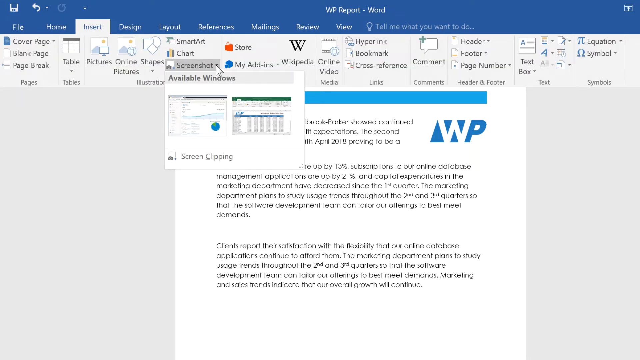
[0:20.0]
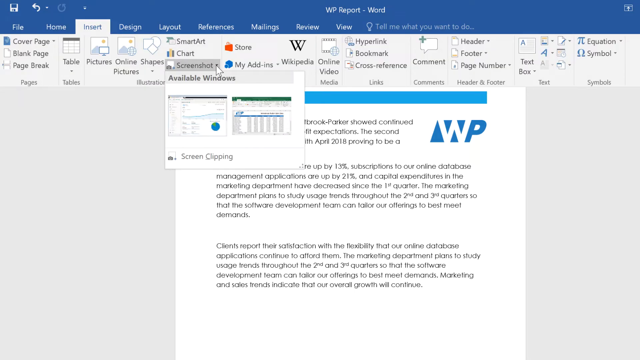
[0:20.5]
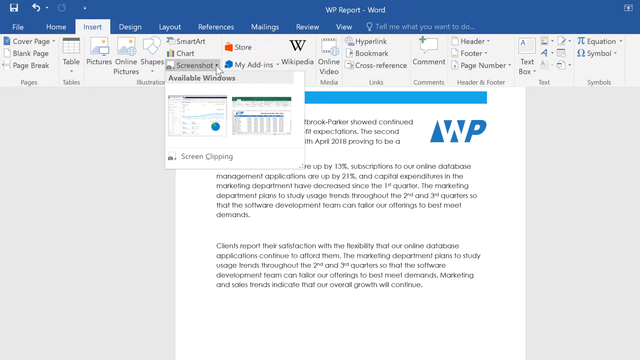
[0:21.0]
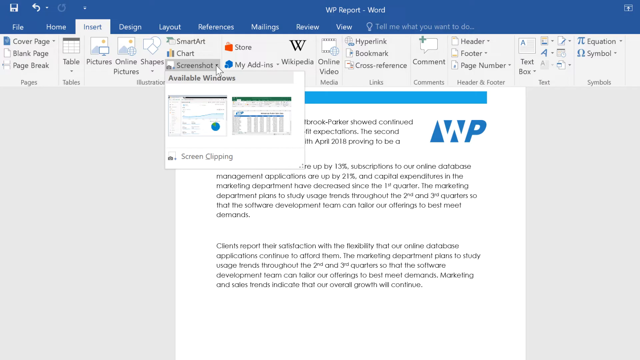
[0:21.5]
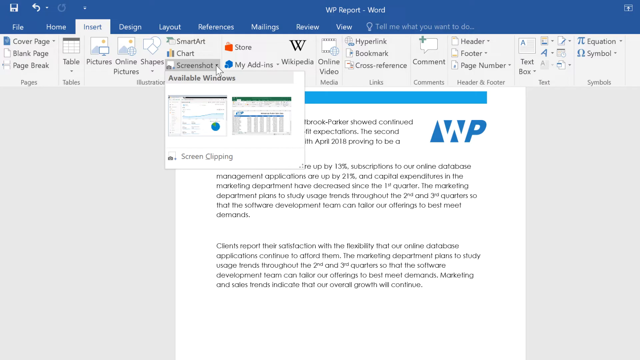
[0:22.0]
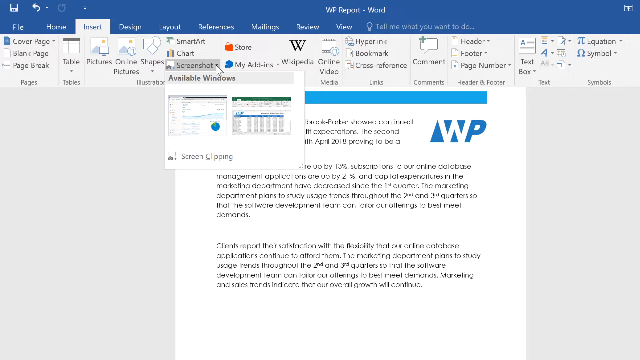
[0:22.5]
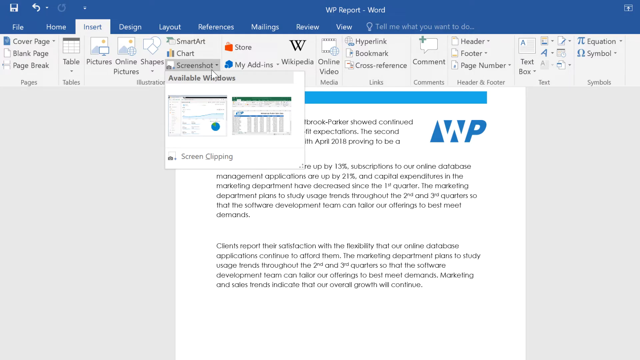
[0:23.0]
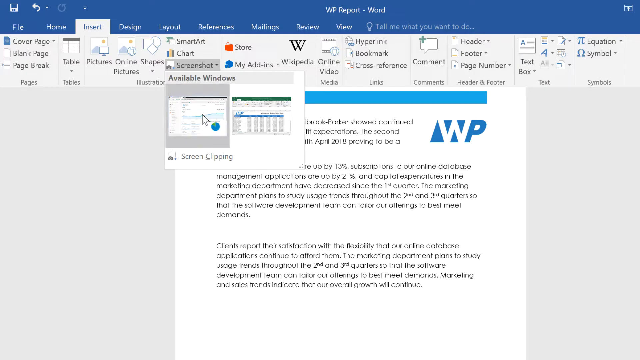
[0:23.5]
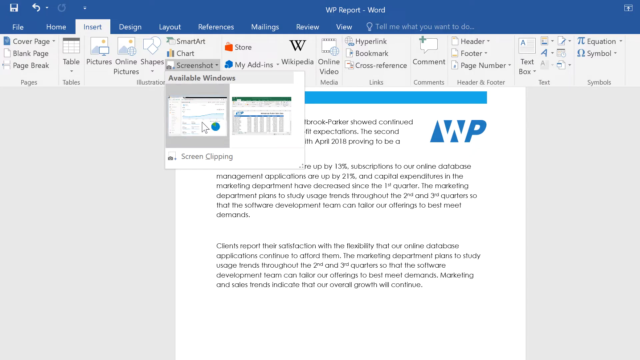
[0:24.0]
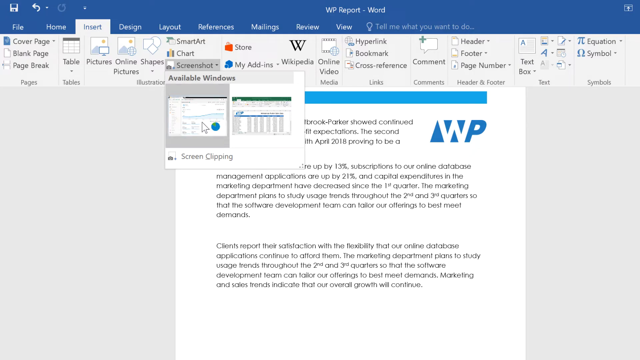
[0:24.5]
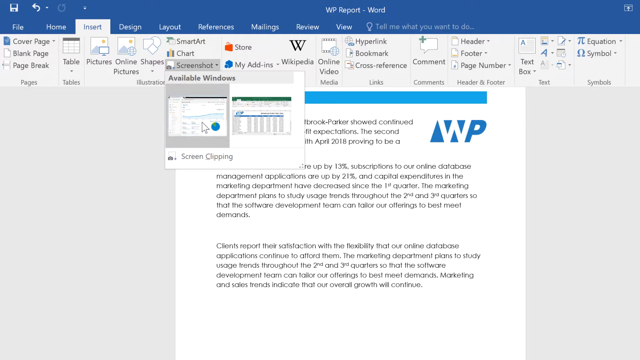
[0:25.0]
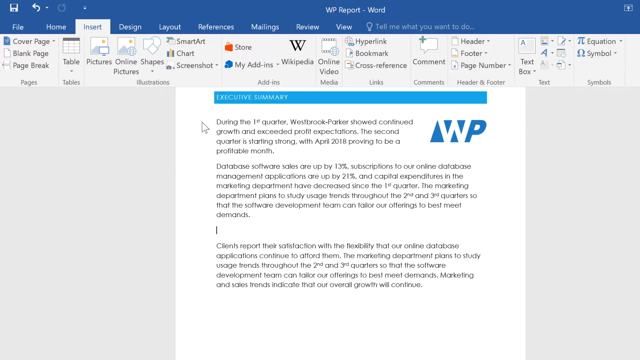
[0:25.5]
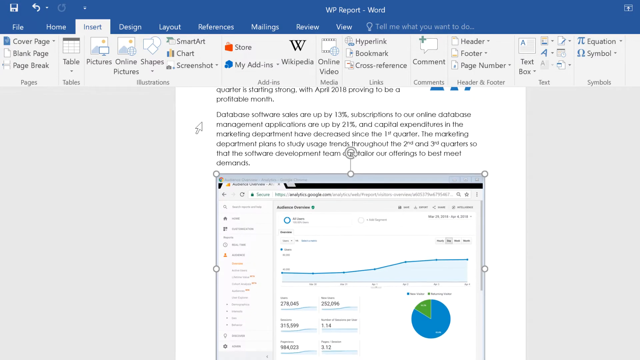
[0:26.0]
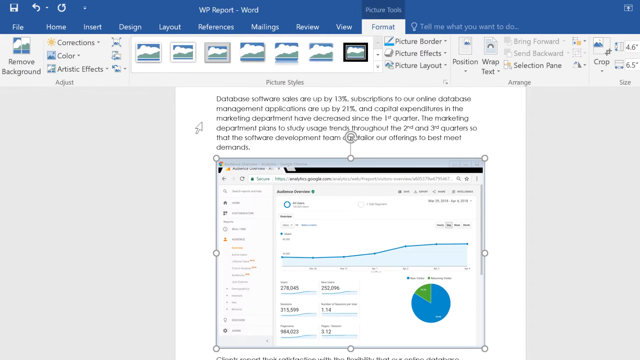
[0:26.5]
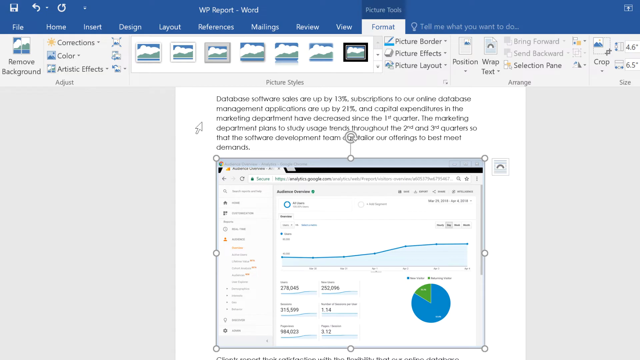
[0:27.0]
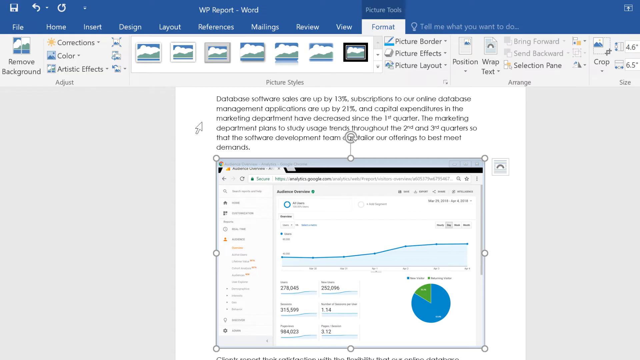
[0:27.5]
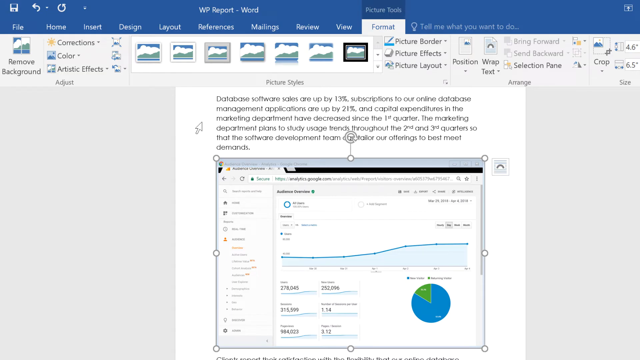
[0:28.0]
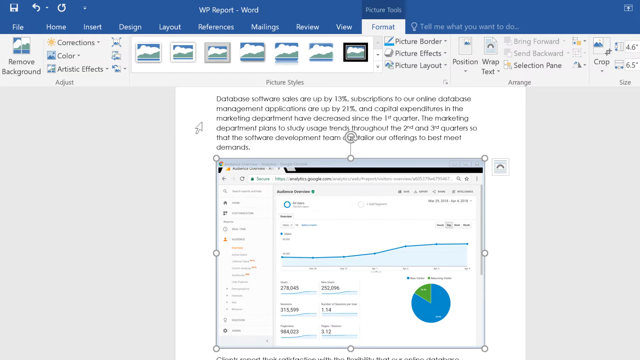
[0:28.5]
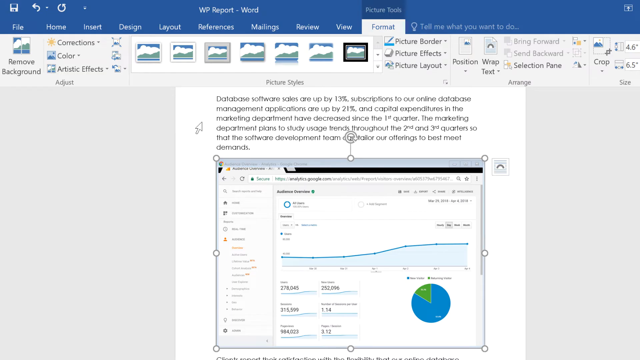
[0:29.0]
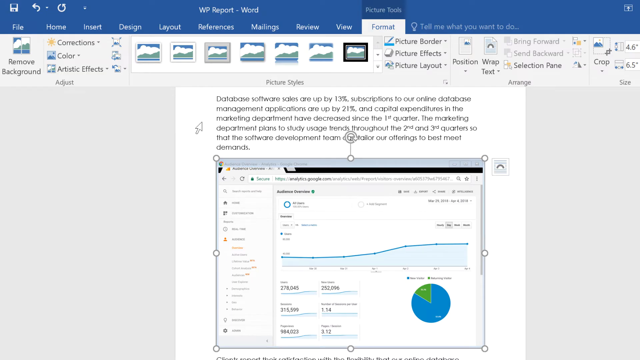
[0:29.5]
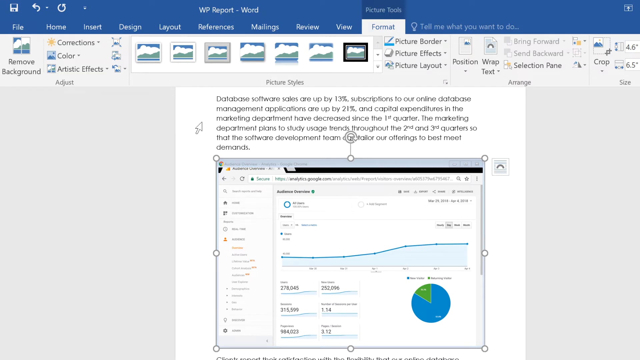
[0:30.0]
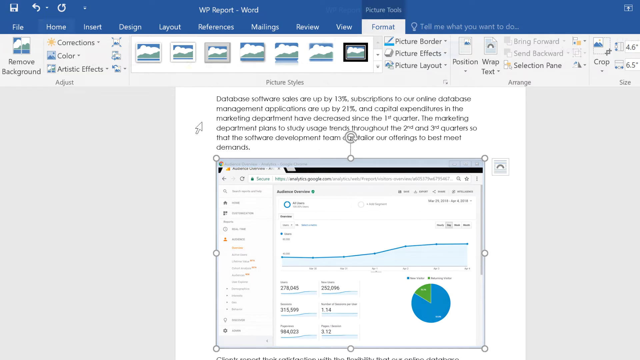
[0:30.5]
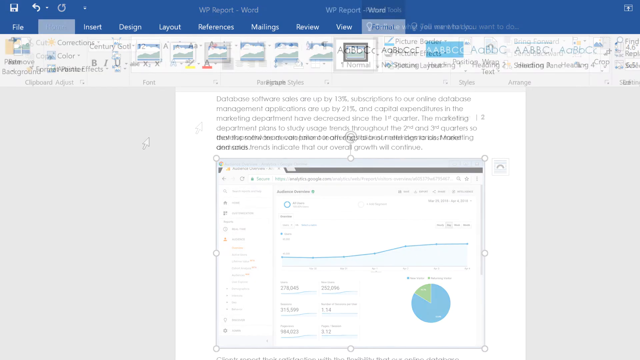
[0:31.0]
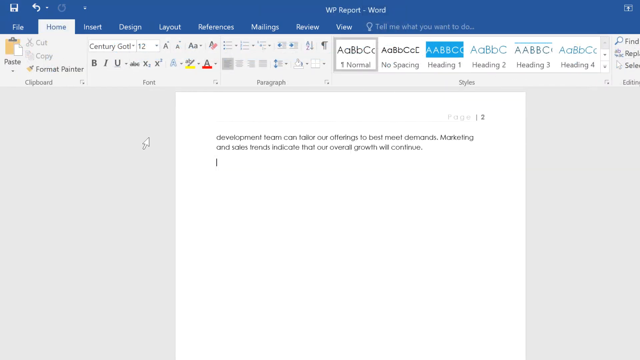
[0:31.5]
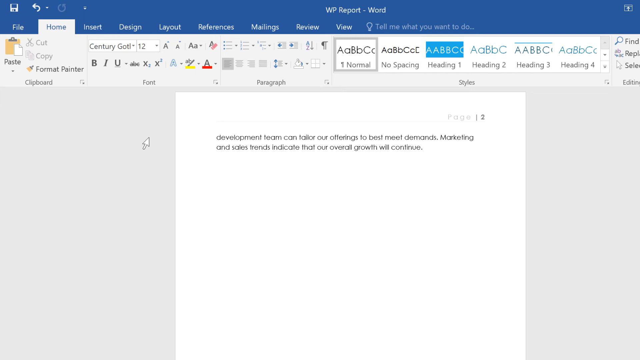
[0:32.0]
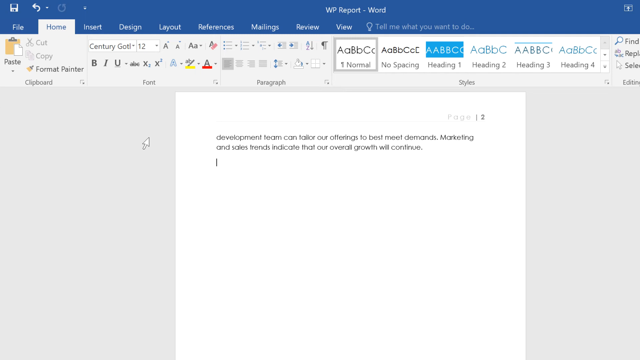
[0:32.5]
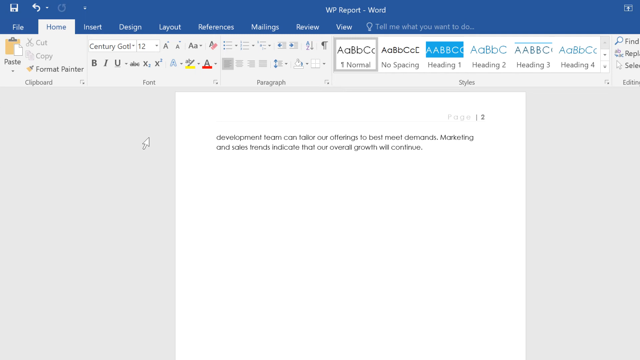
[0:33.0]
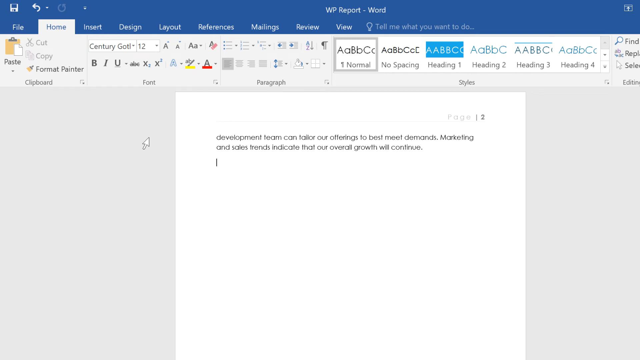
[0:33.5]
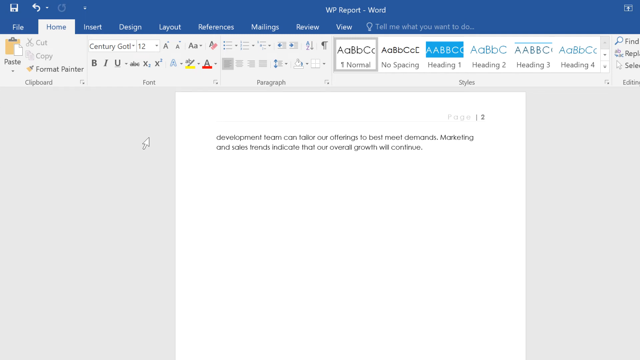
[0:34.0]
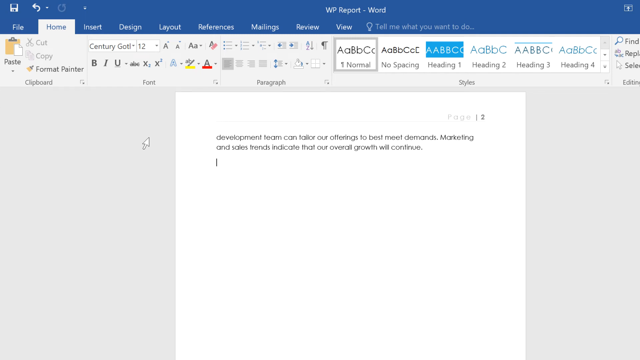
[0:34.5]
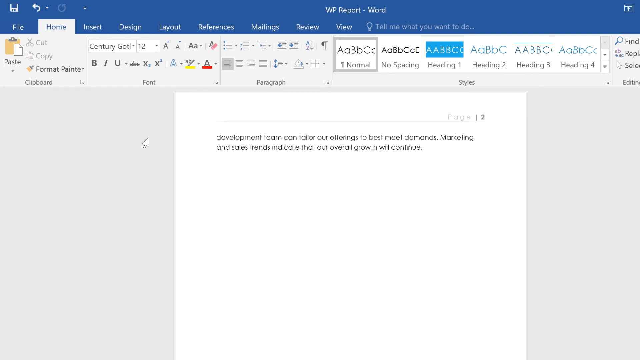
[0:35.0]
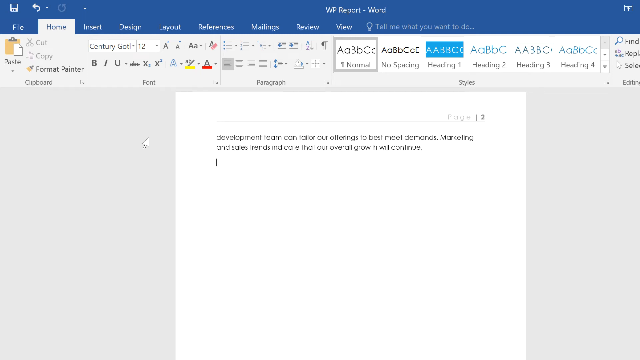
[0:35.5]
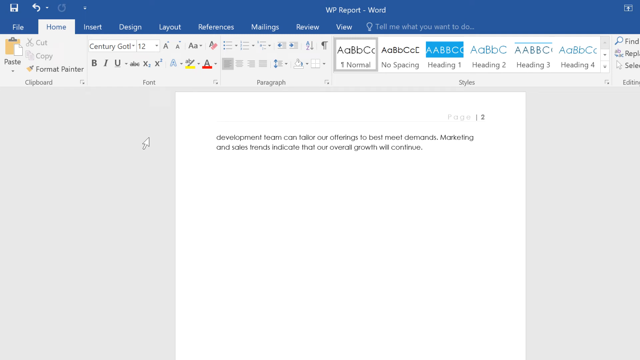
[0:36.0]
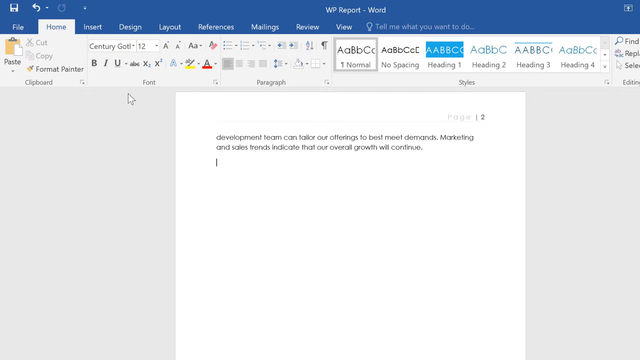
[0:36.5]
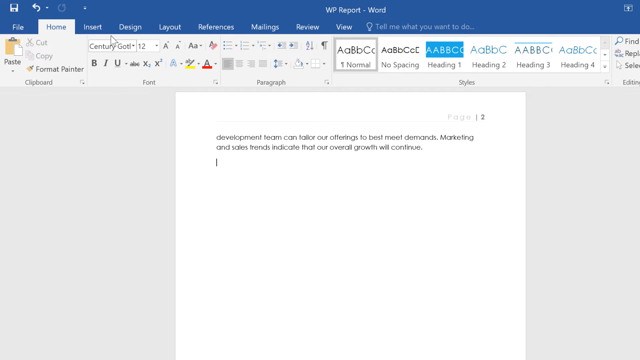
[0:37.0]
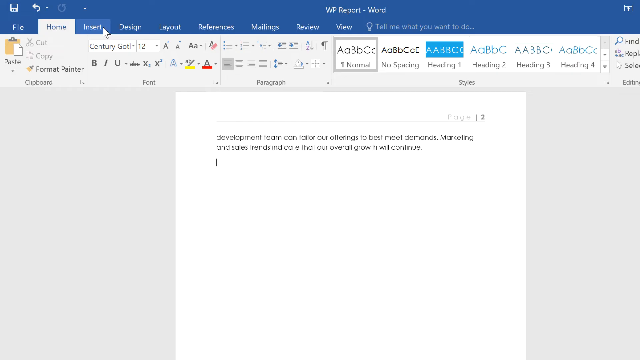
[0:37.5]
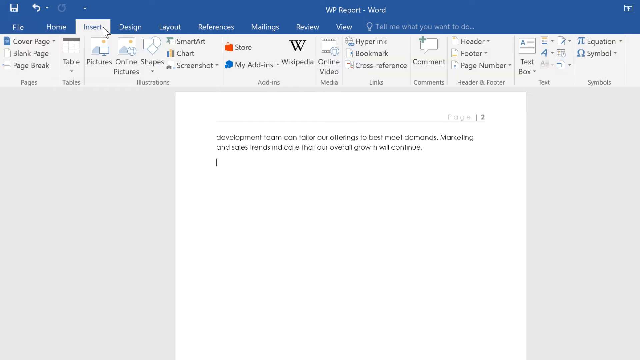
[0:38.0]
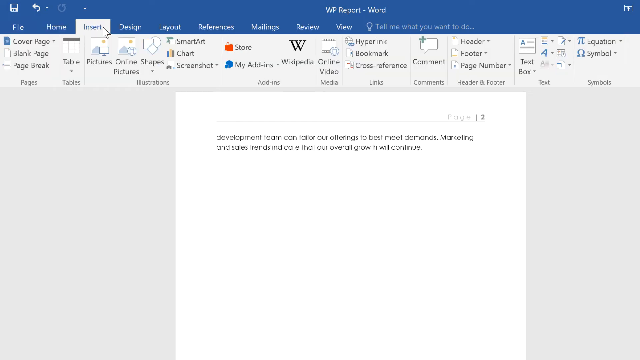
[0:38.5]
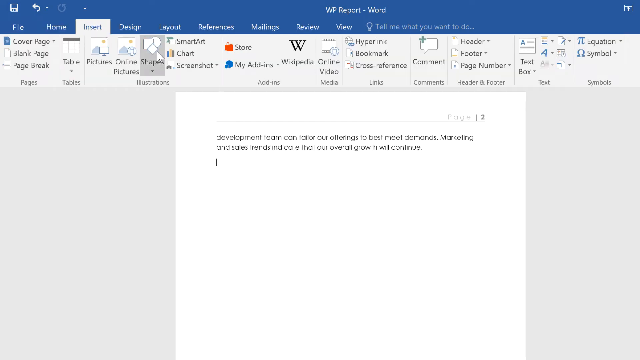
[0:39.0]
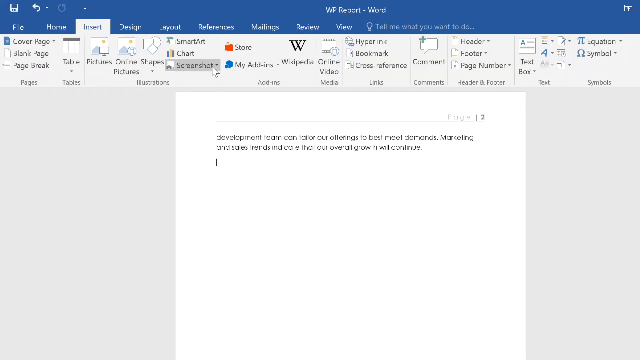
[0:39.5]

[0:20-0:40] The Word document is still on screen. Some type of graph or picture has been added to it. A little text is typed, and then the user goes in to add a screenshot, and the available windows are shown.